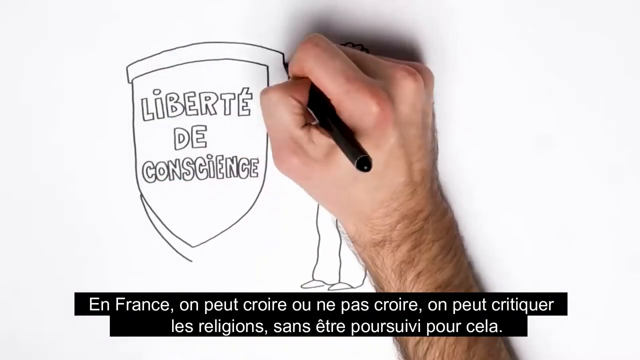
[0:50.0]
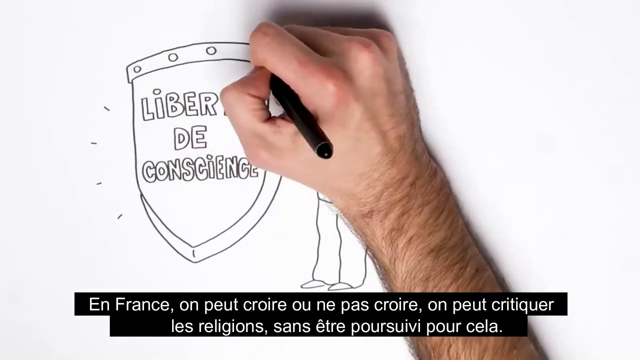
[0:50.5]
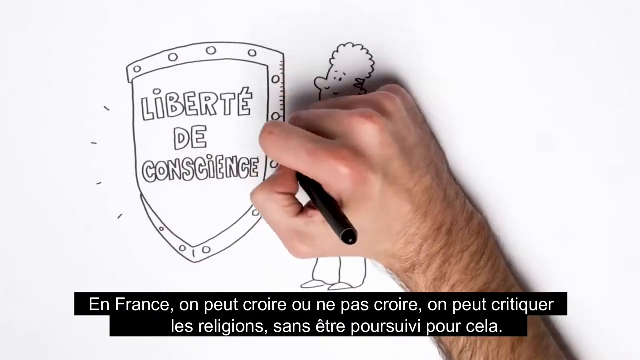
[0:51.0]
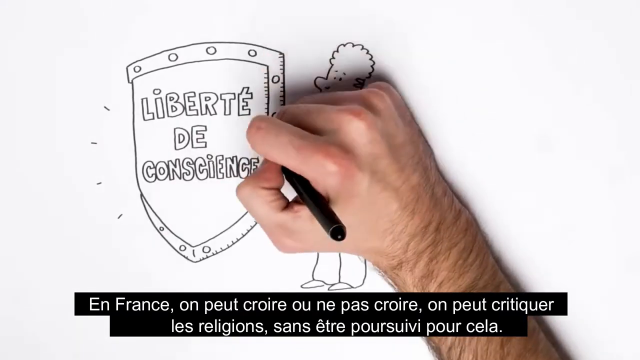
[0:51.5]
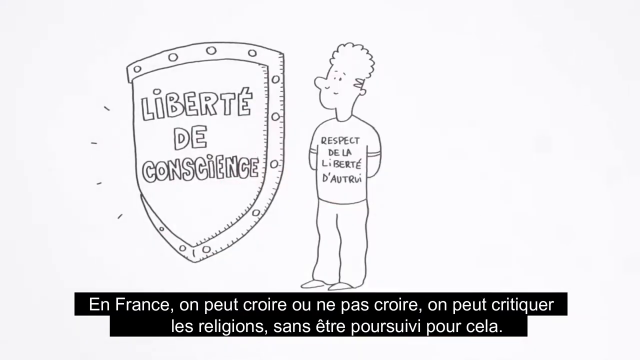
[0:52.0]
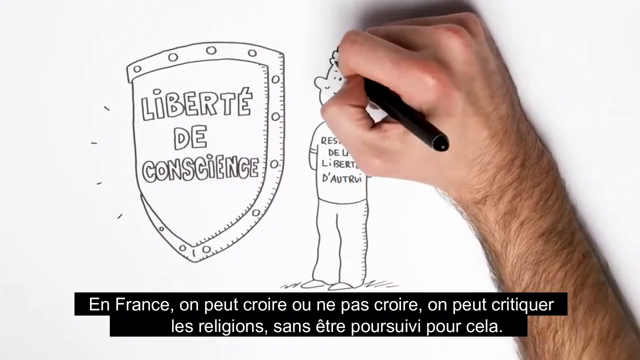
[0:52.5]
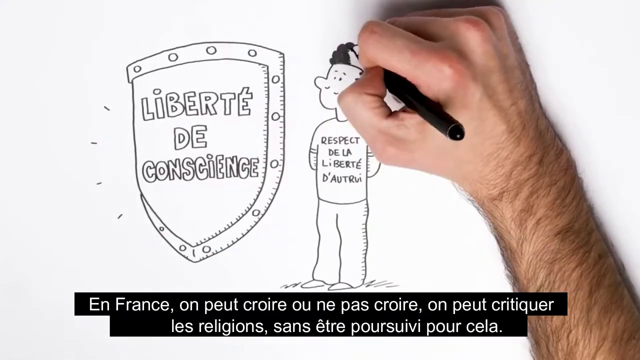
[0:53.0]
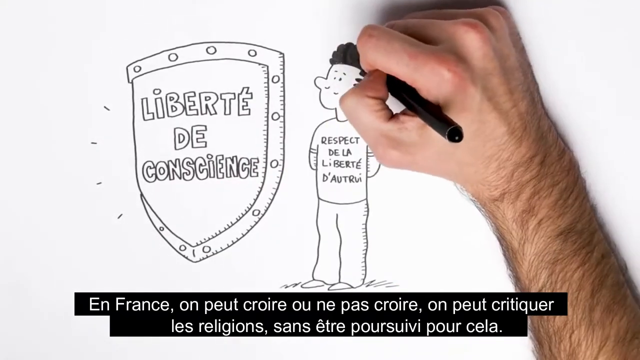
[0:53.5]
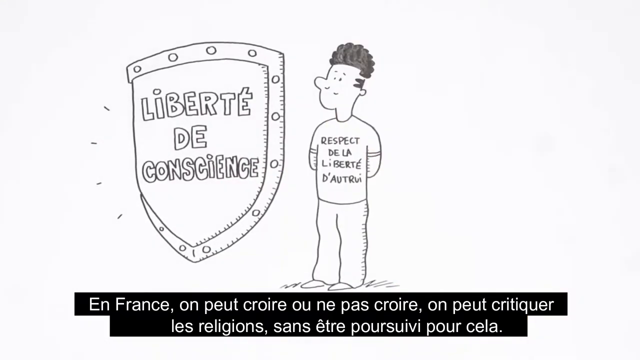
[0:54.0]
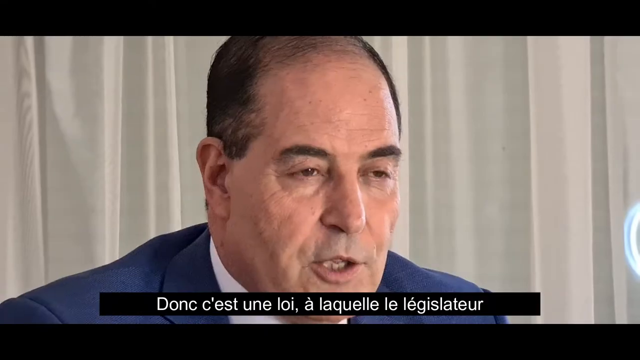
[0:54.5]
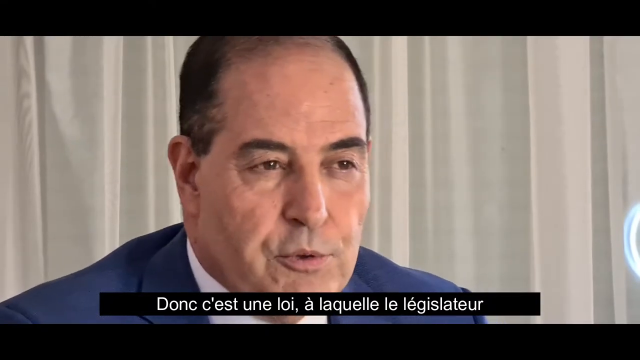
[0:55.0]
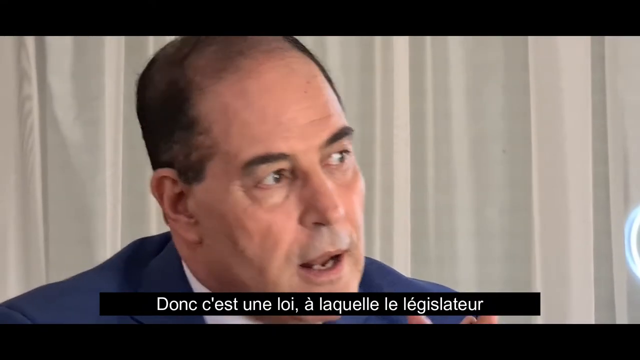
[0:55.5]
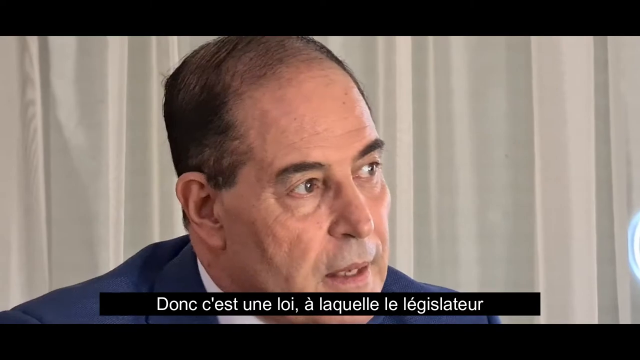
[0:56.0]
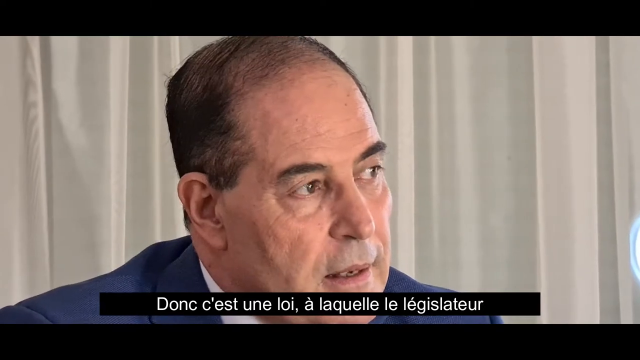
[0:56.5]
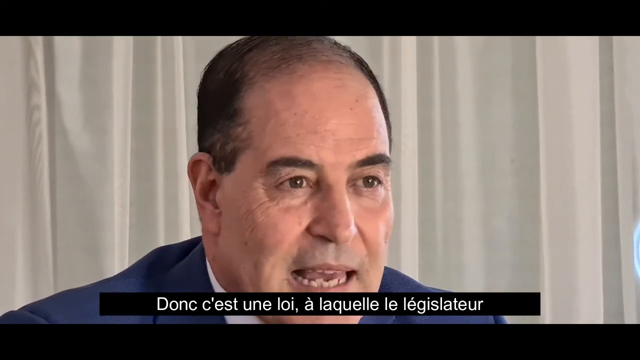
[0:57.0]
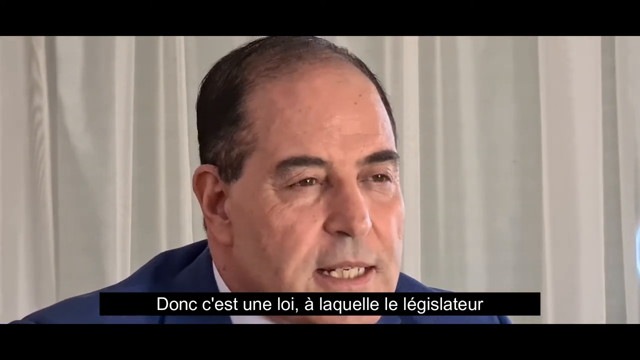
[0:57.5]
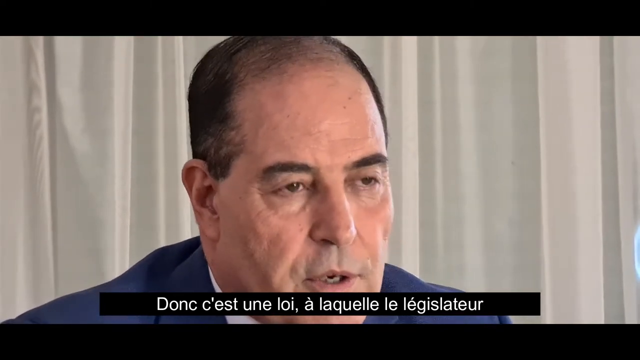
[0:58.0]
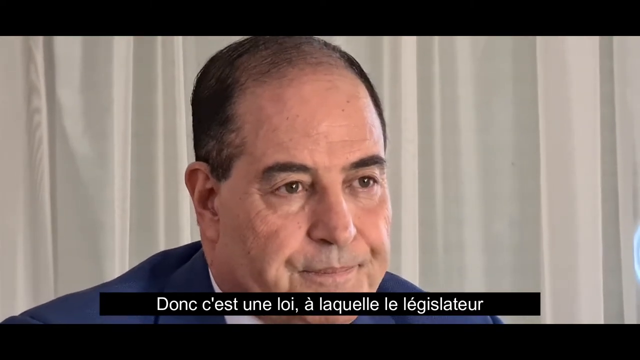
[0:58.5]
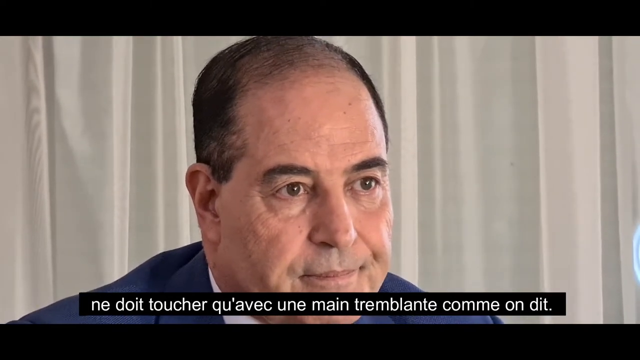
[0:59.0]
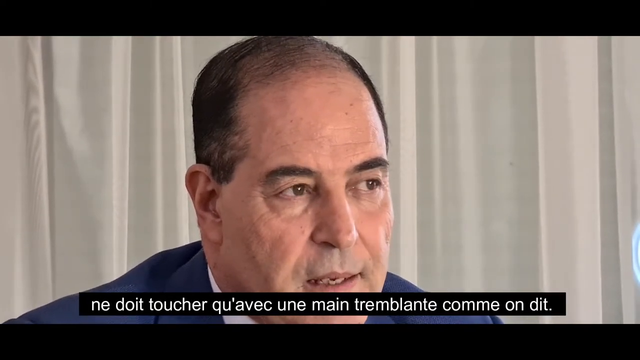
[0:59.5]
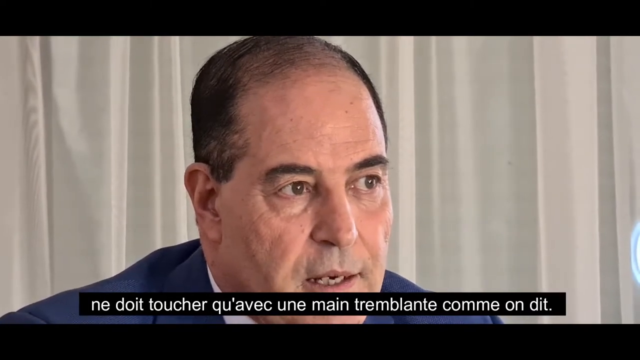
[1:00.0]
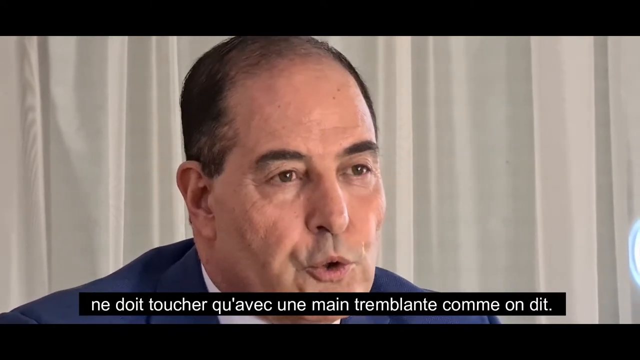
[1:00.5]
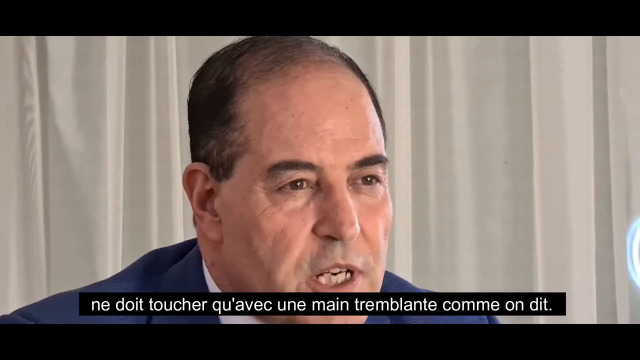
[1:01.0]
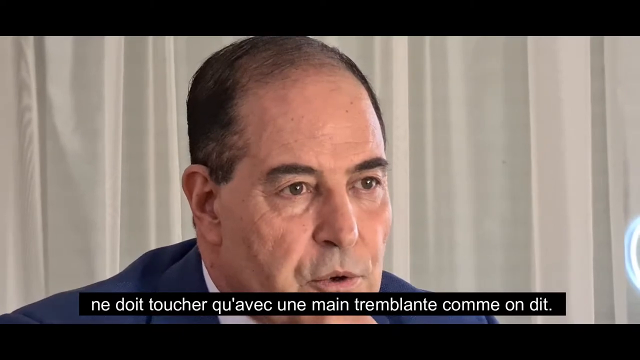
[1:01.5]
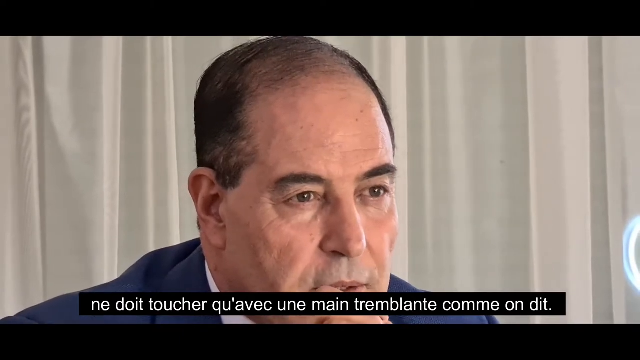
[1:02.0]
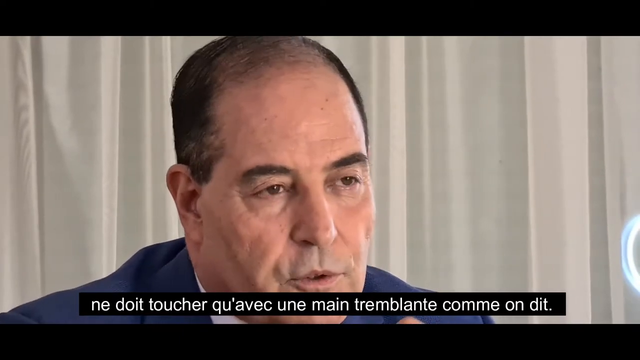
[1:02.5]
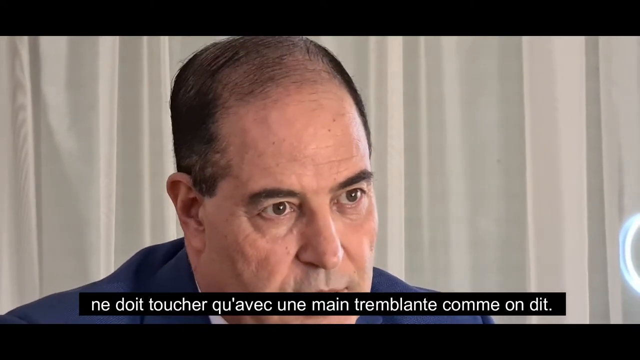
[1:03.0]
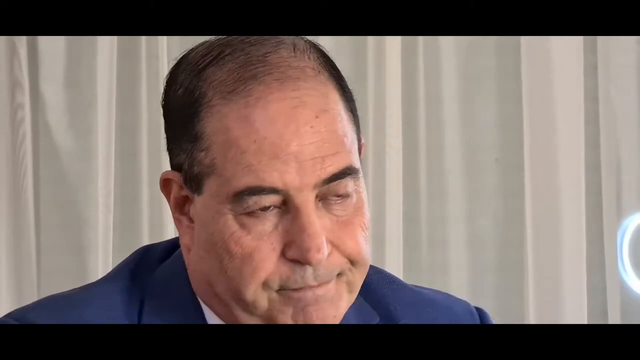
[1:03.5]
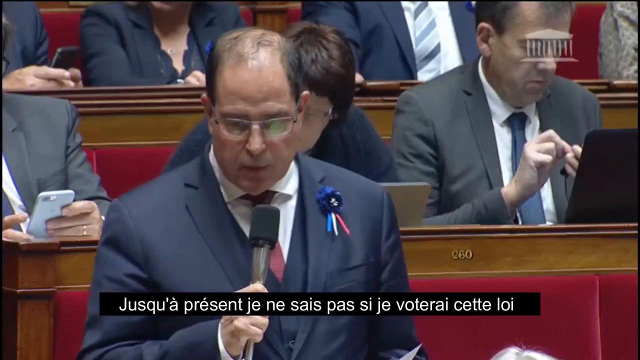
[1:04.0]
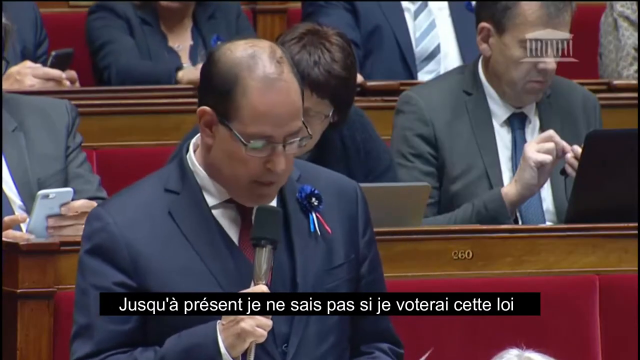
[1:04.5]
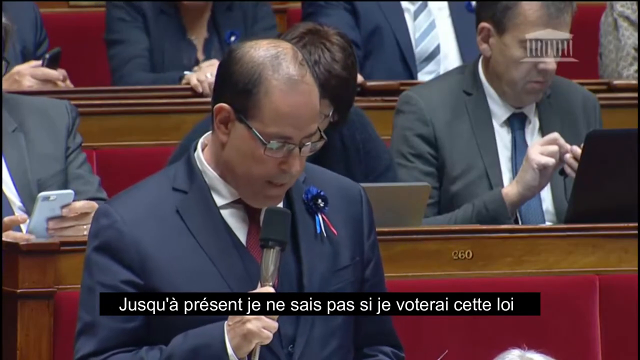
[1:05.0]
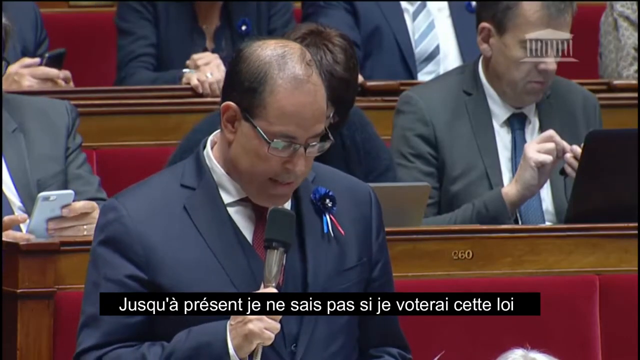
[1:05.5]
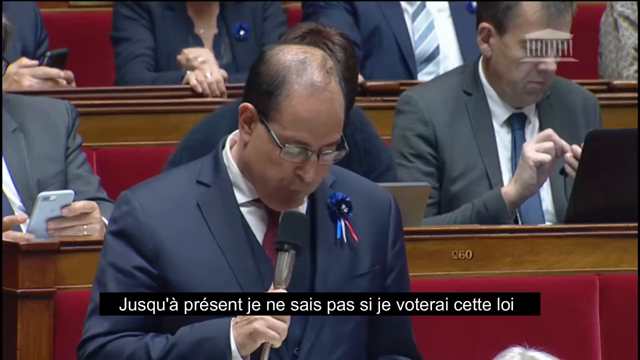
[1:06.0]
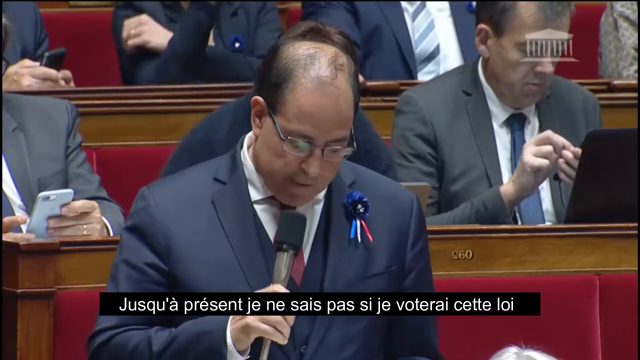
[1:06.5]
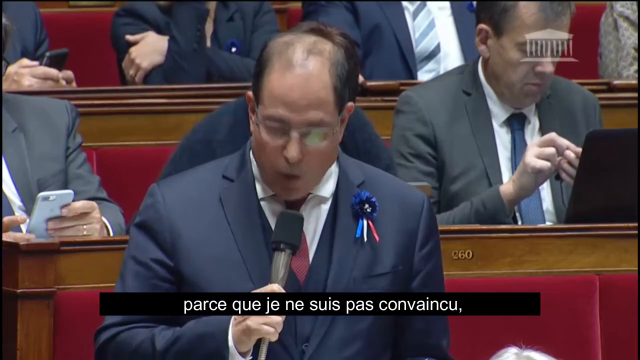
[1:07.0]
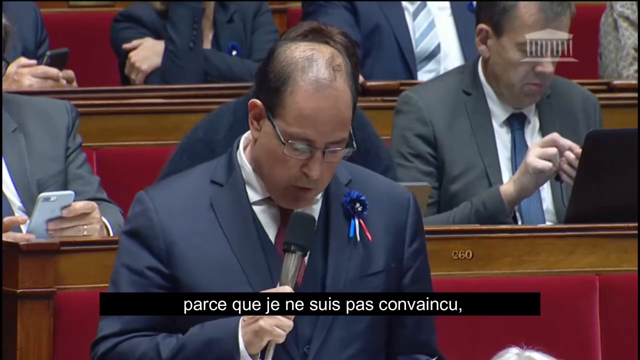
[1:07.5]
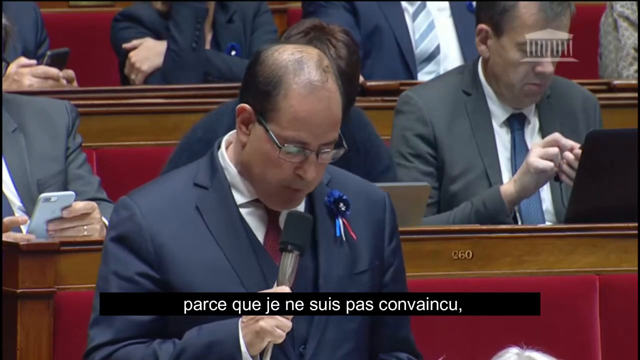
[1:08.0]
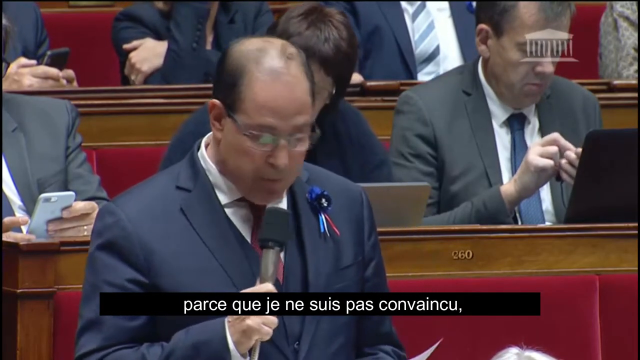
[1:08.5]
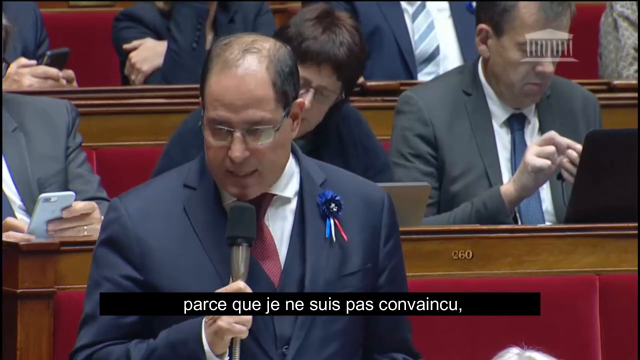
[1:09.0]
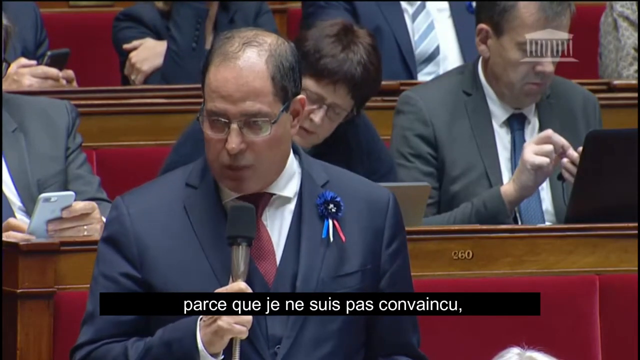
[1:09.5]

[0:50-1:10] The hand continues drawing: a person on the right and, to the left, what looks like a shield with three words in the middle: "Liberte De Conscience". The hand colors the person's hair black. The scene shifts back to the seated man in the suit, with the camera zoomed in close to his face; captions appear at the bottom as he talks with a very serious look. The scene then shifts to the same man speaking in what appears to be some sort of parliament or congress room of another country. He holds a microphone in his right hand, wears glasses, and has a flower pin attached to the right side of his suit. Other people sit in the background. Here he appears much younger than in the first shots of him.